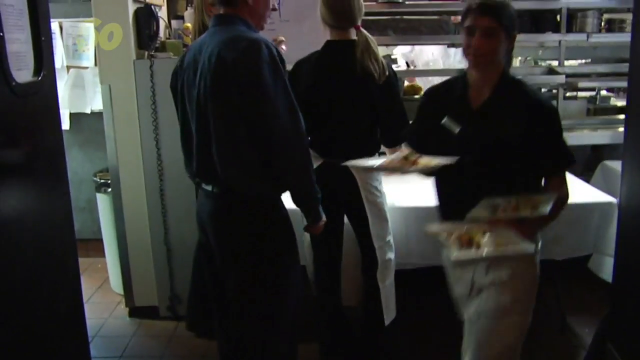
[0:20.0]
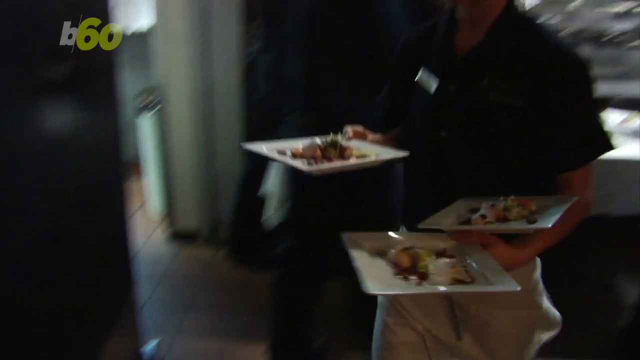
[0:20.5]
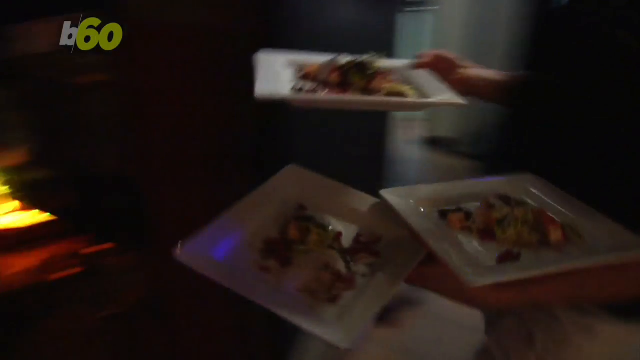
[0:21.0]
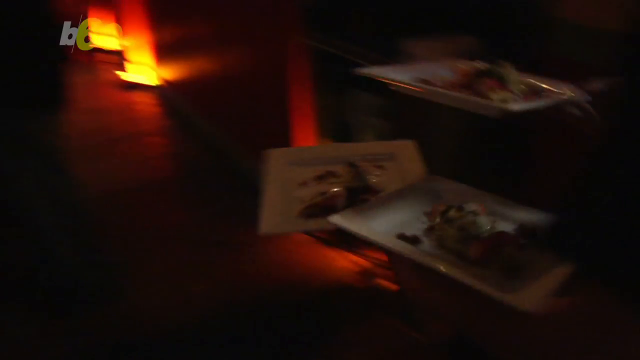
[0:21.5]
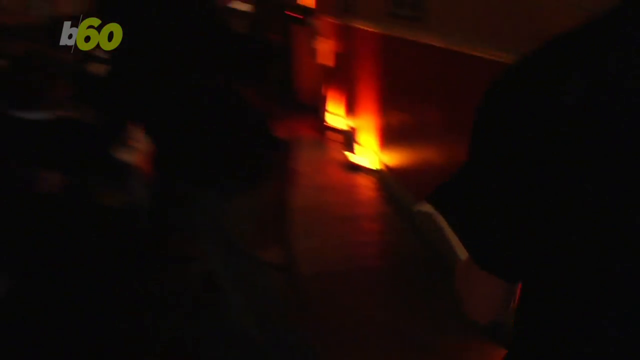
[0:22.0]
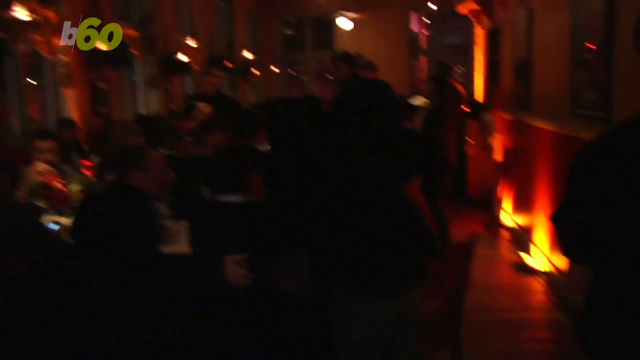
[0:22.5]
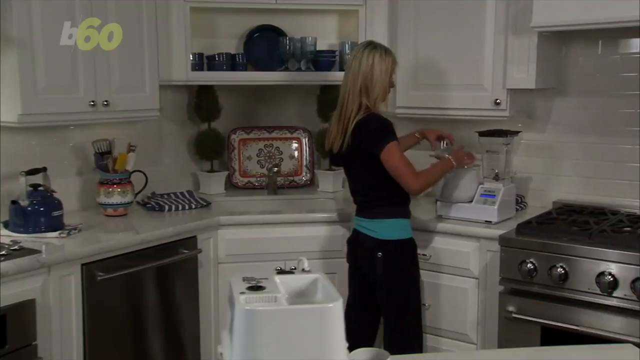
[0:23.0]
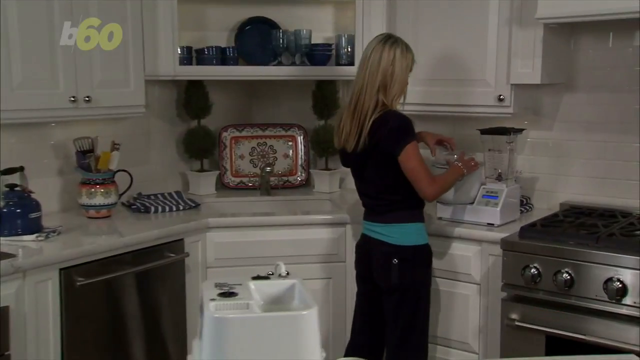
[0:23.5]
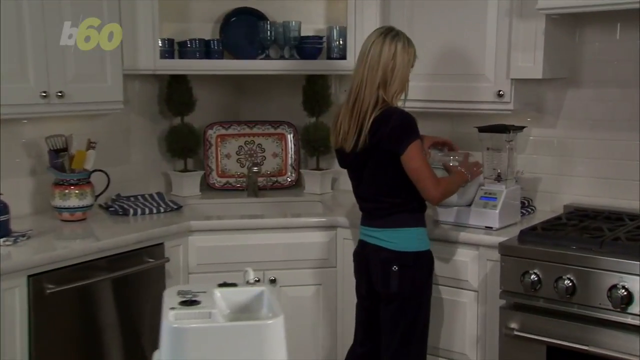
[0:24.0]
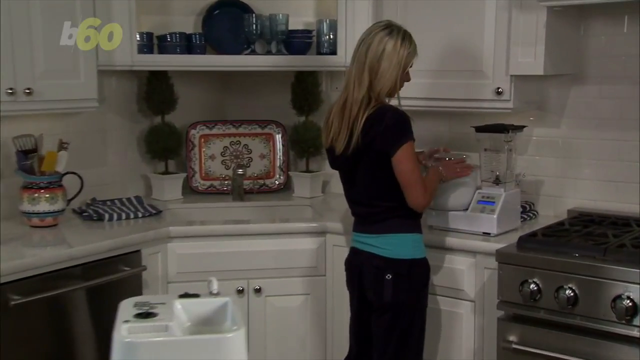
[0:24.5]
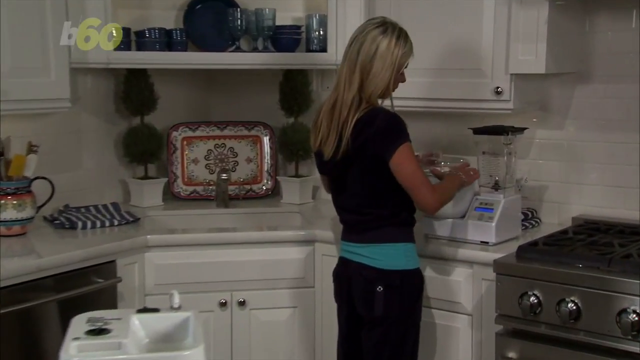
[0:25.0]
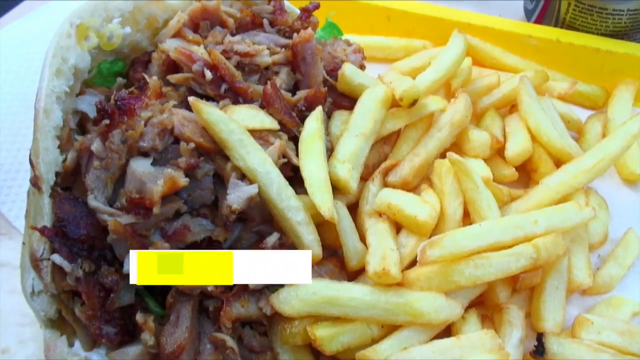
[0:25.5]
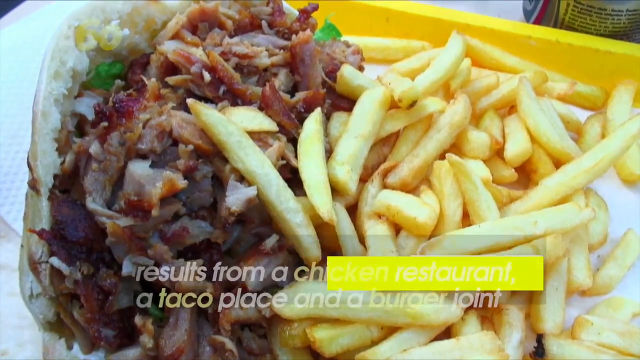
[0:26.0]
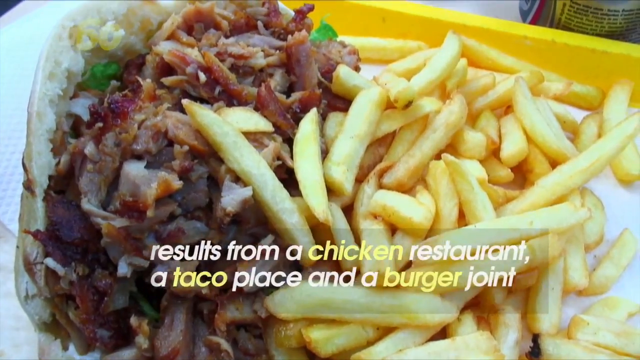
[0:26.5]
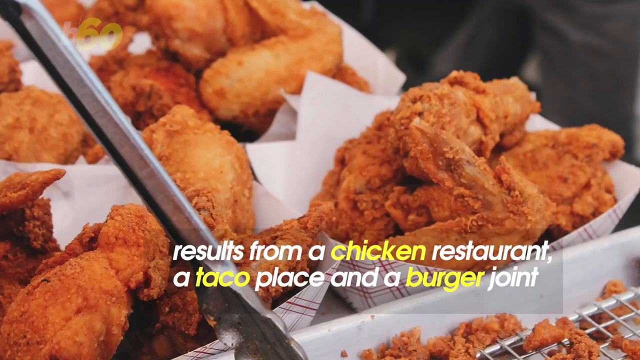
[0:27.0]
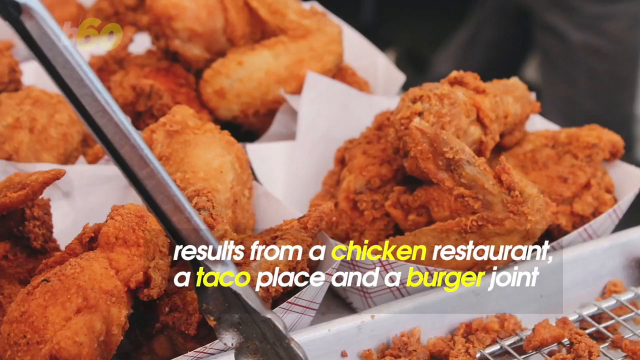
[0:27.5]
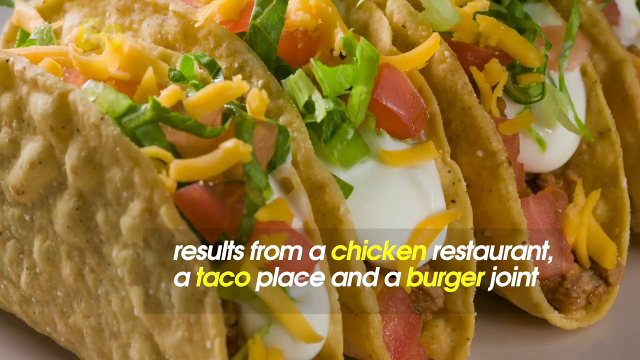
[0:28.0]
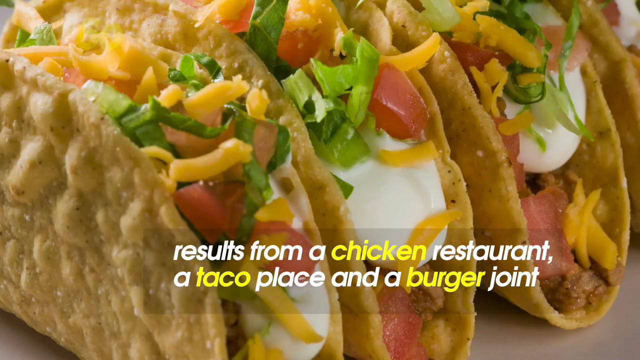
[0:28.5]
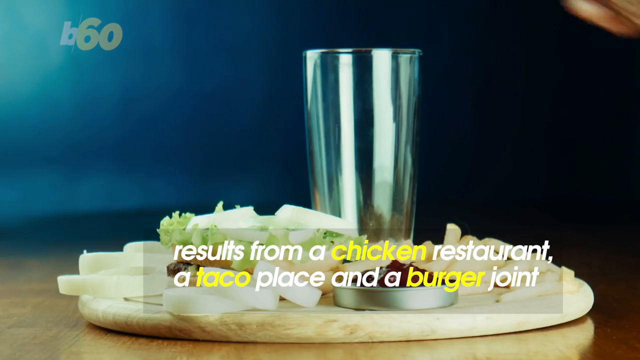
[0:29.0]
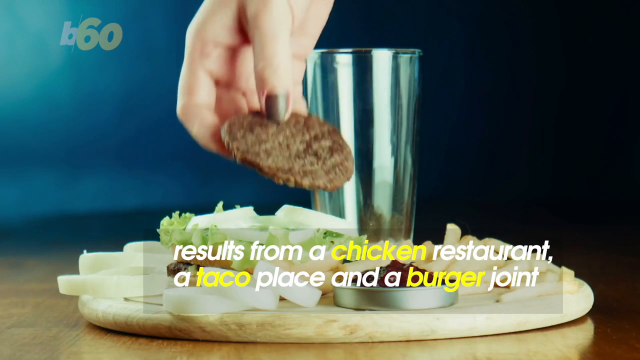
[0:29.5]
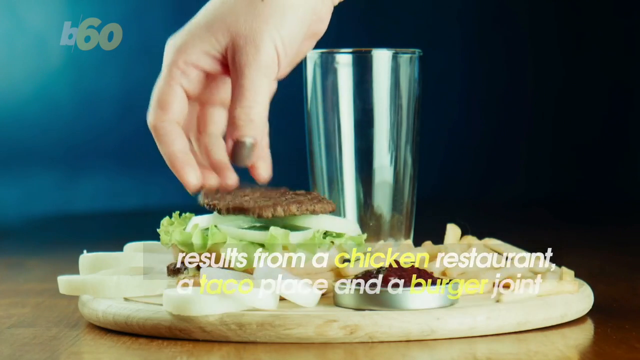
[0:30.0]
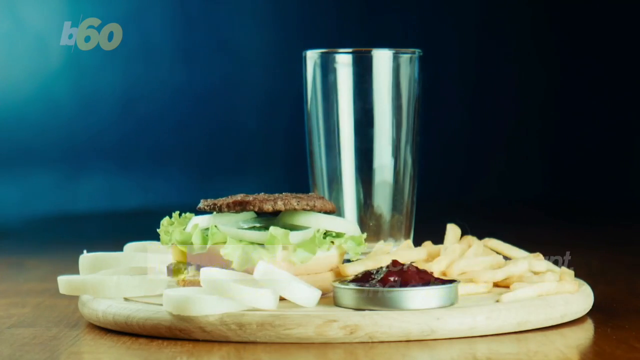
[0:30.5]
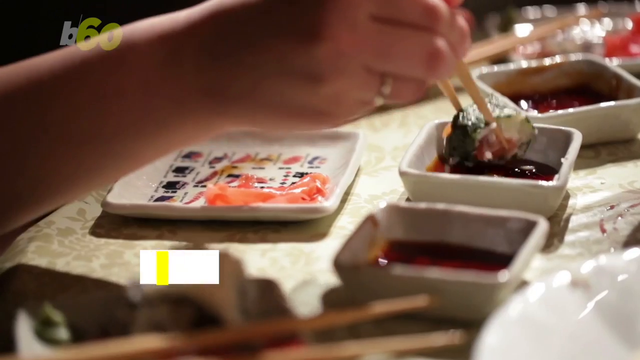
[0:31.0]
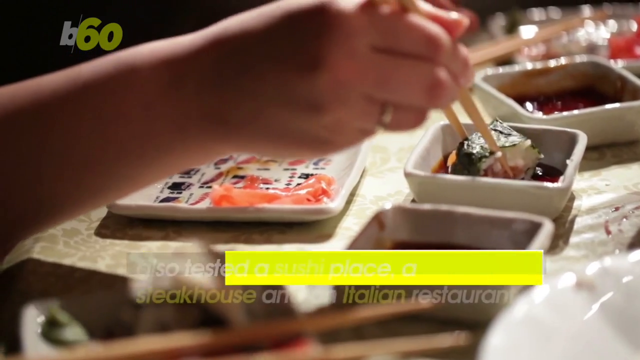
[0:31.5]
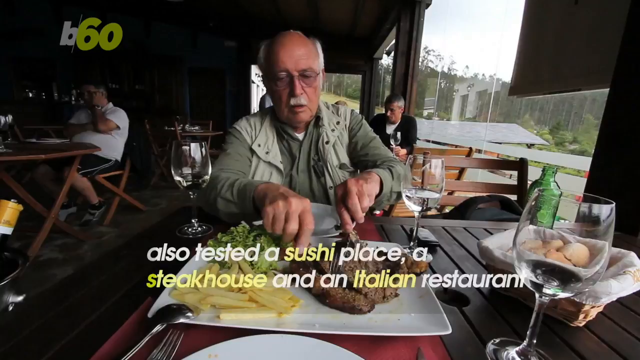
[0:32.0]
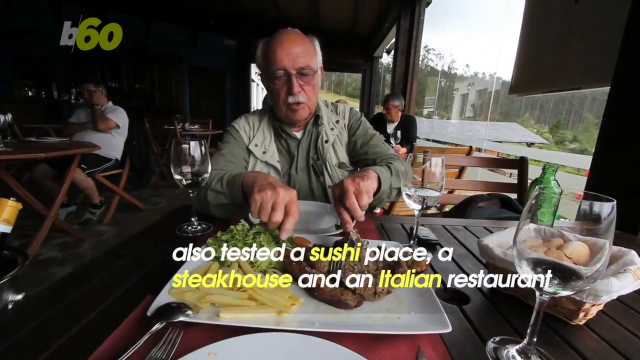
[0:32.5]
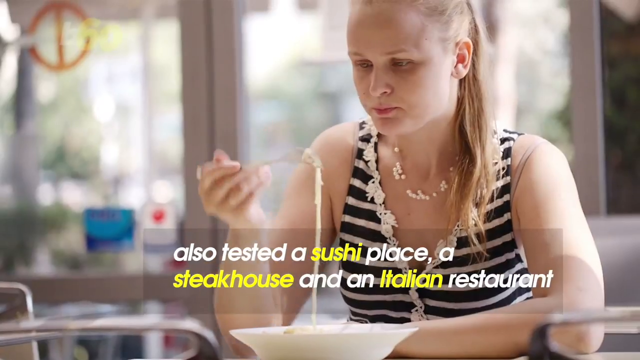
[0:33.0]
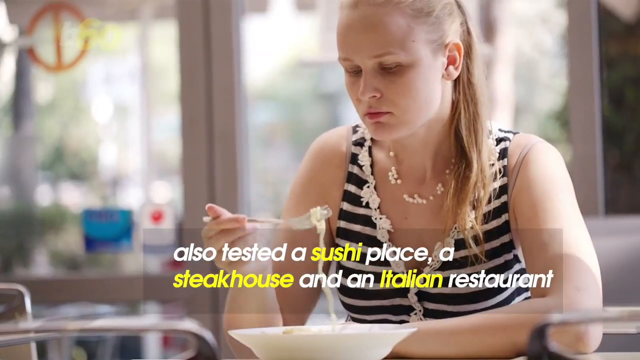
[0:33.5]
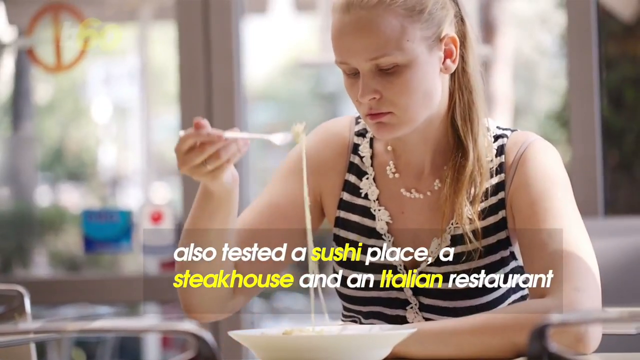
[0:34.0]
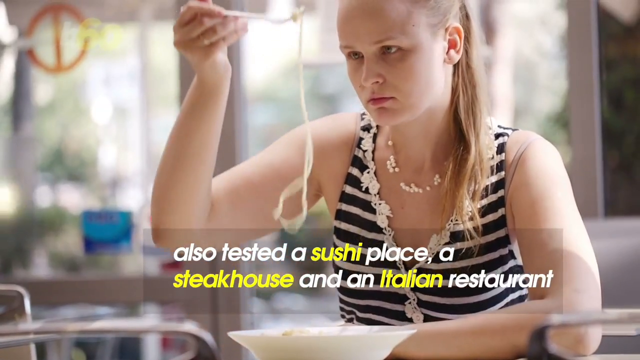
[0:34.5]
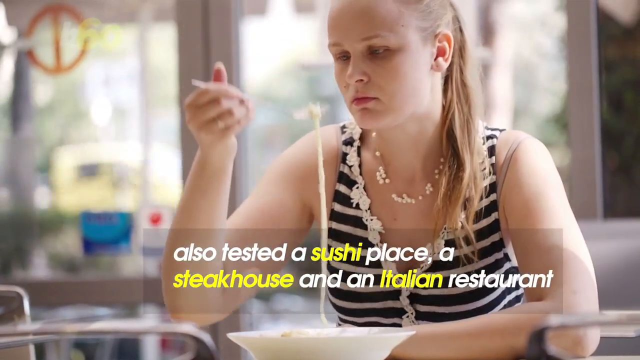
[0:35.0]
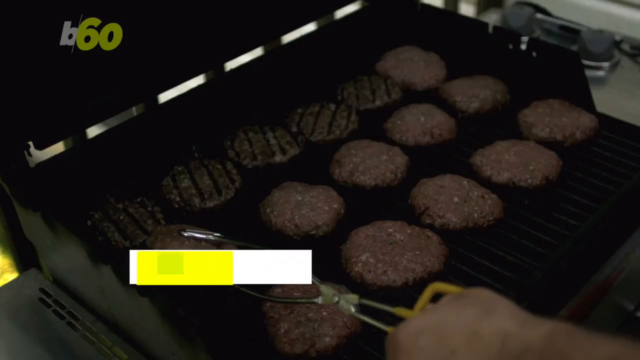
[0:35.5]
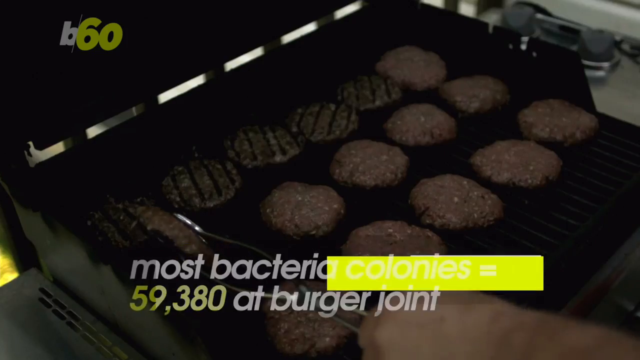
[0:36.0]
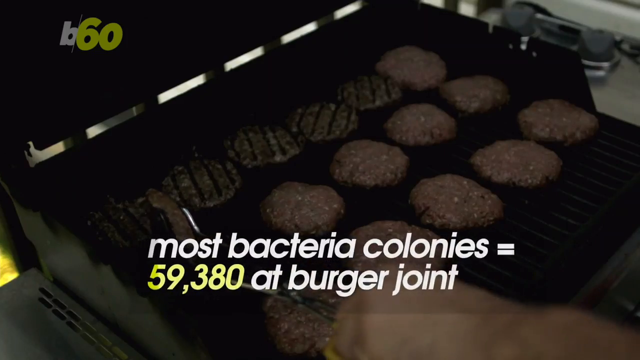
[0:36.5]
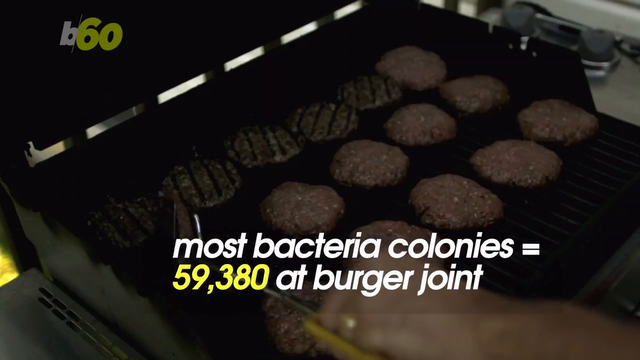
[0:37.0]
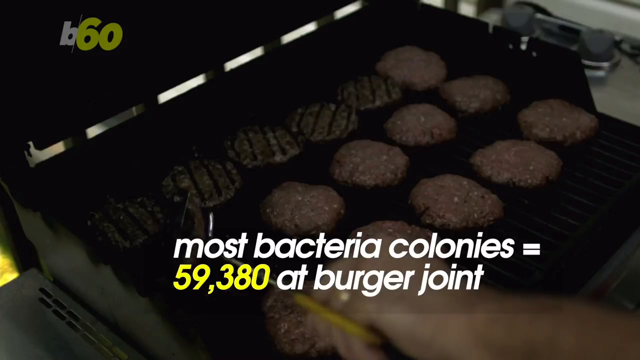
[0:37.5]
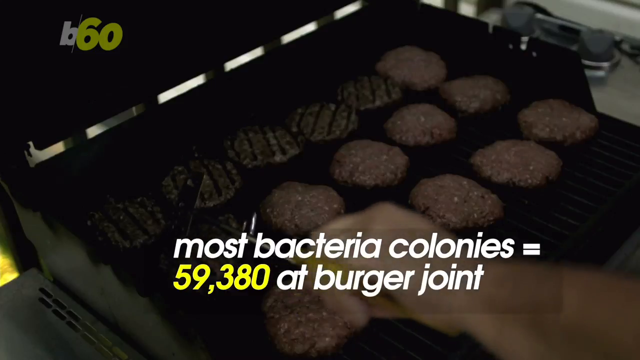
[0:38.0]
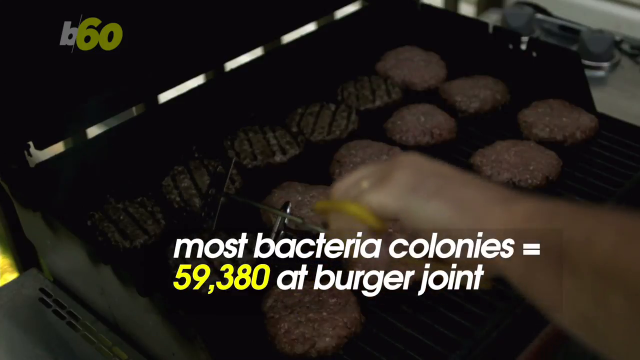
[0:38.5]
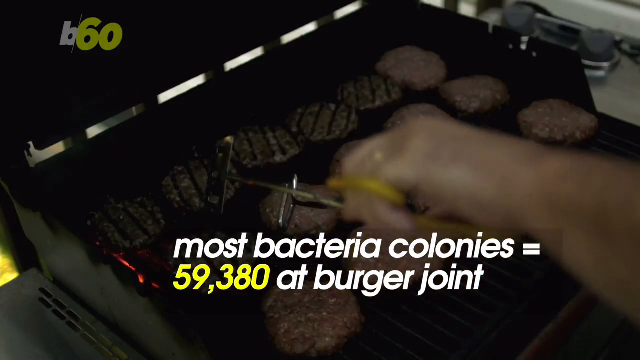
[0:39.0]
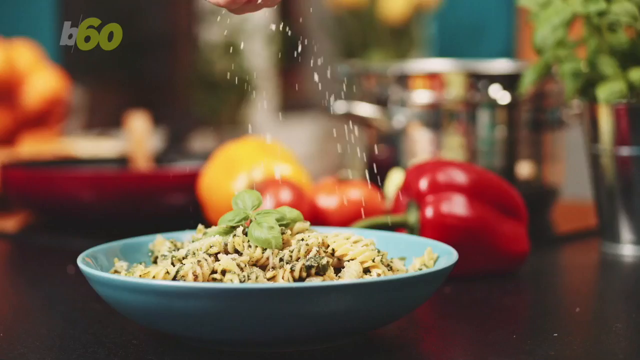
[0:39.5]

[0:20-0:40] In what looks like a fancy restaurant, a waiter or waitress carries out three meals at one time, each on a square white plate. In a home kitchen, a woman with blonde hair weighs something on a scale. French fries appear with some sort of chopped meat sandwich. Text reads "results from a" with the rest blanked out in yellow so it cannot be read; the yellow then moves to reveal "results from a chicken restaurant, a taco place and a burger joint." Chicken tacos are shown, then a hamburger. Someone outside on a restaurant deck eats a very fancy meal. Text reads "I also tested a sushi place, a steakhouse and an Italian restaurant." A guy cuts his big piece of meat, and a girl is about to eat noodles. Text reads "most bacteria colonies equal 59 380 at burger joints," and somebody charcoal-flames a burger.